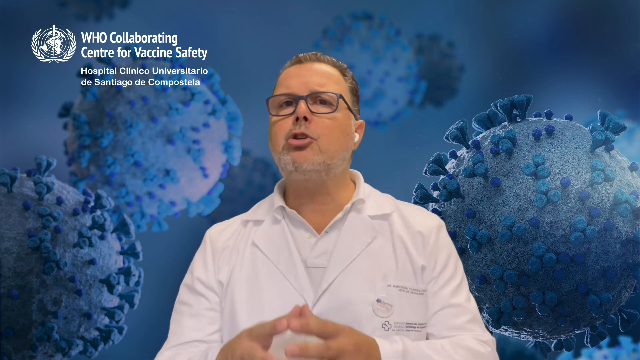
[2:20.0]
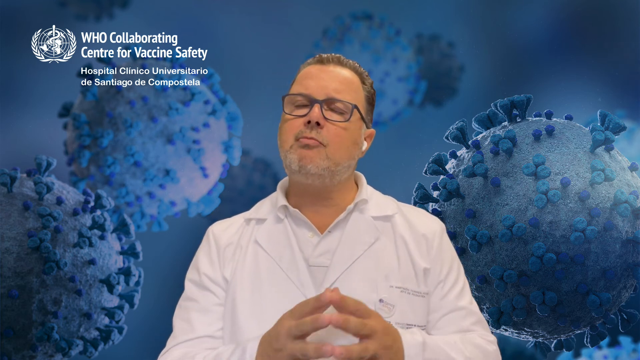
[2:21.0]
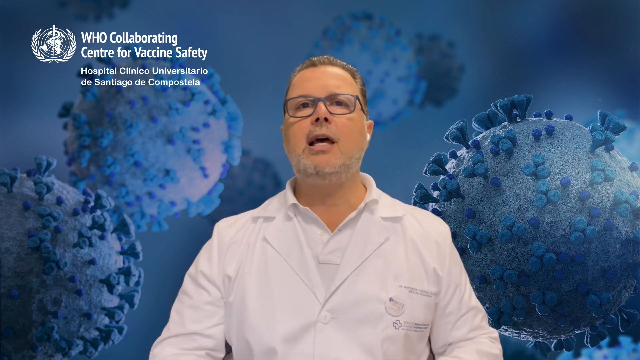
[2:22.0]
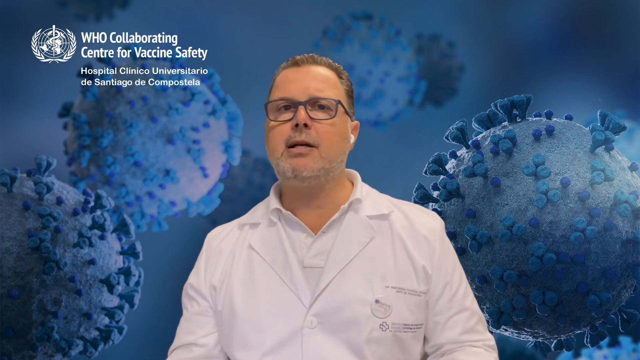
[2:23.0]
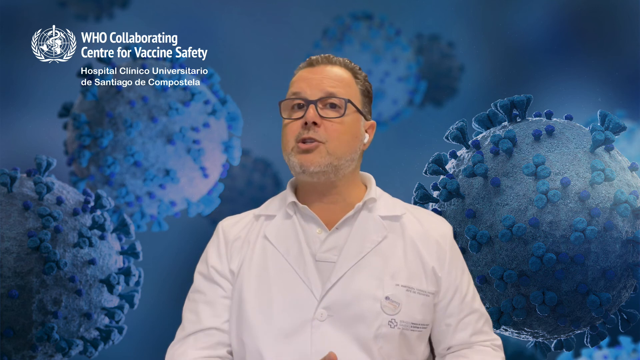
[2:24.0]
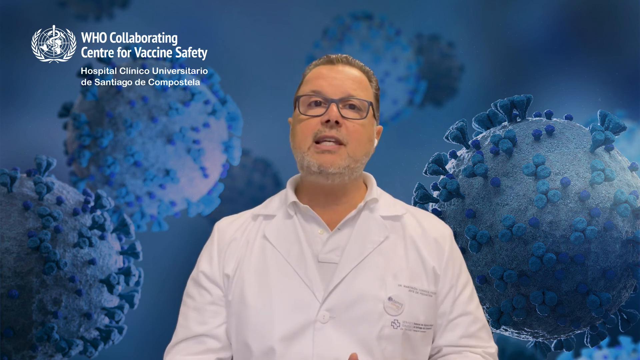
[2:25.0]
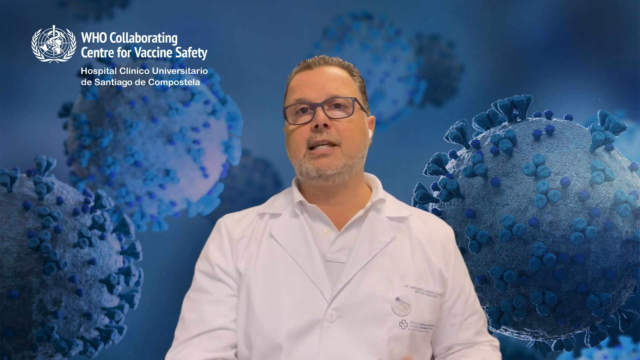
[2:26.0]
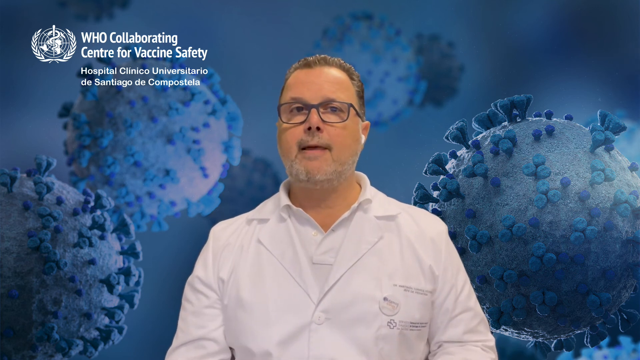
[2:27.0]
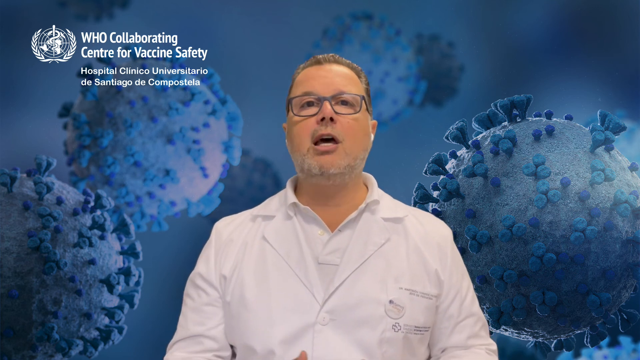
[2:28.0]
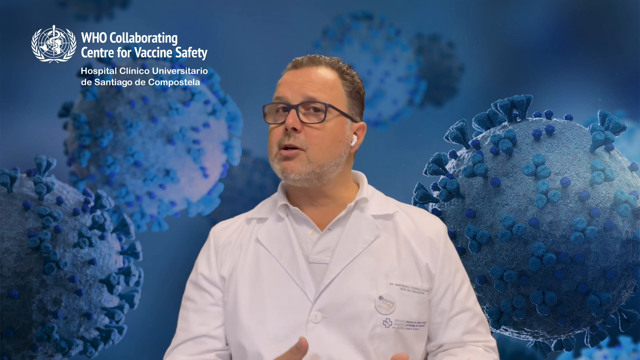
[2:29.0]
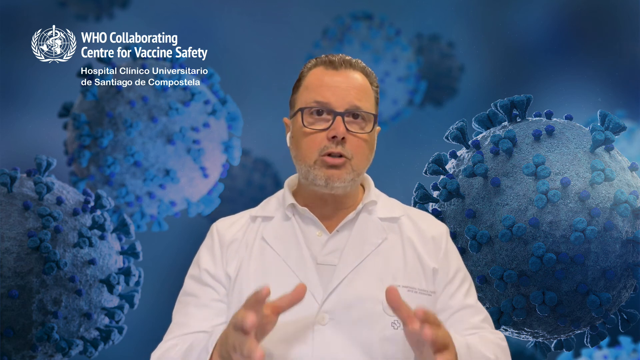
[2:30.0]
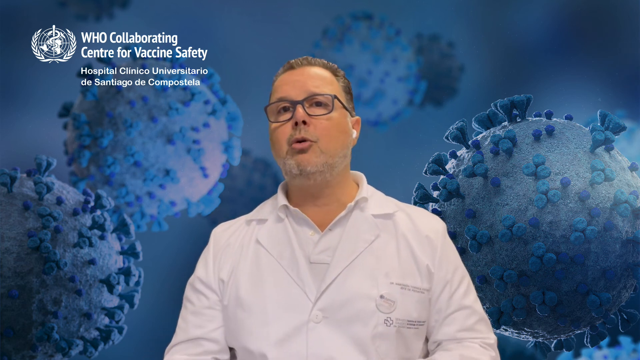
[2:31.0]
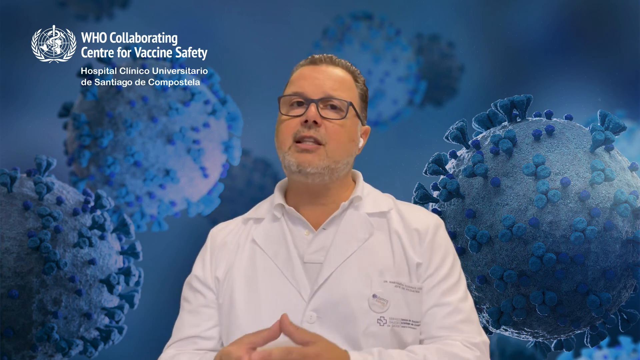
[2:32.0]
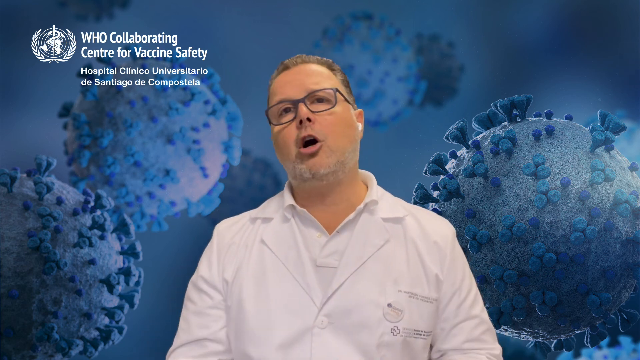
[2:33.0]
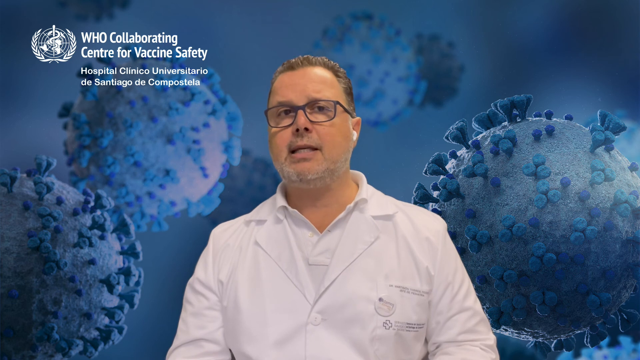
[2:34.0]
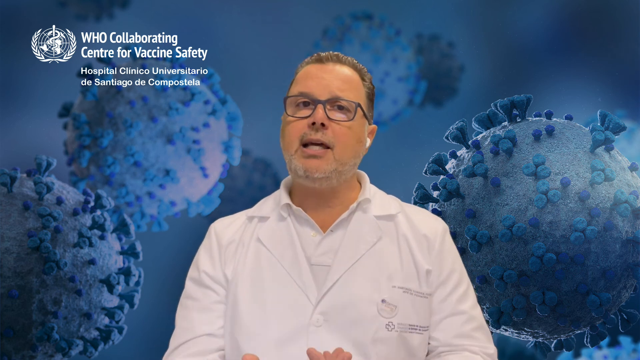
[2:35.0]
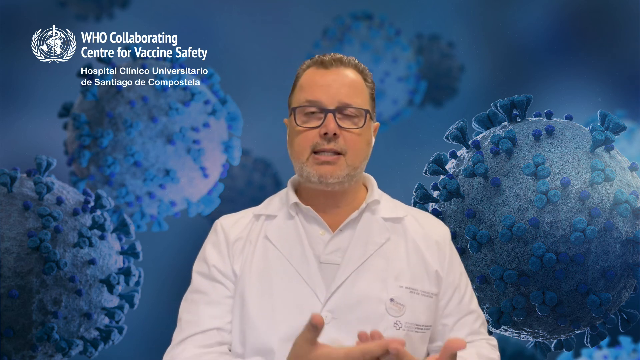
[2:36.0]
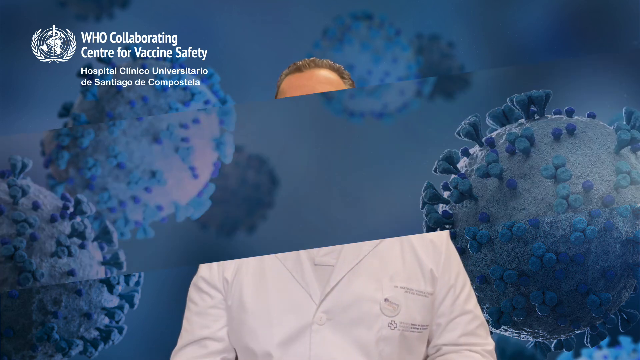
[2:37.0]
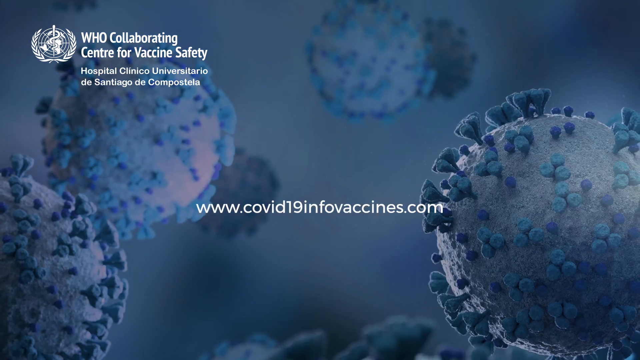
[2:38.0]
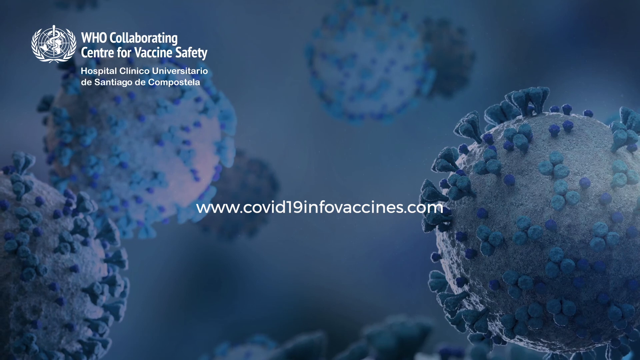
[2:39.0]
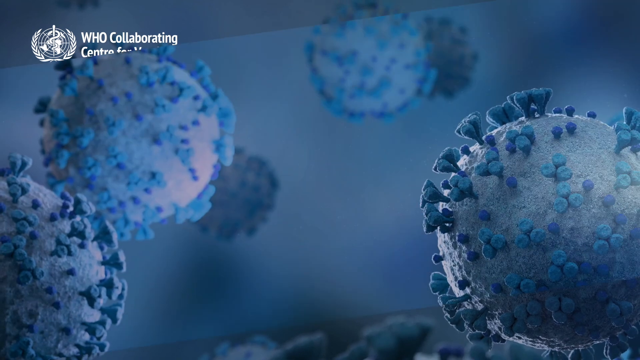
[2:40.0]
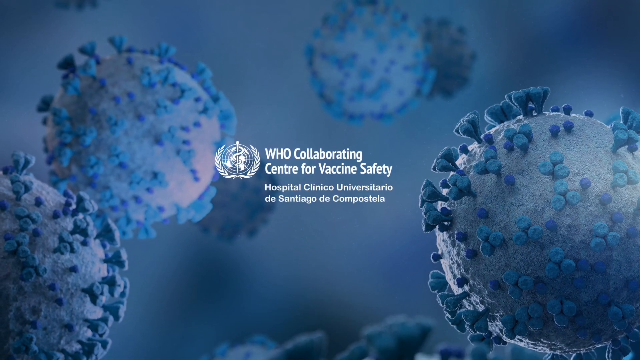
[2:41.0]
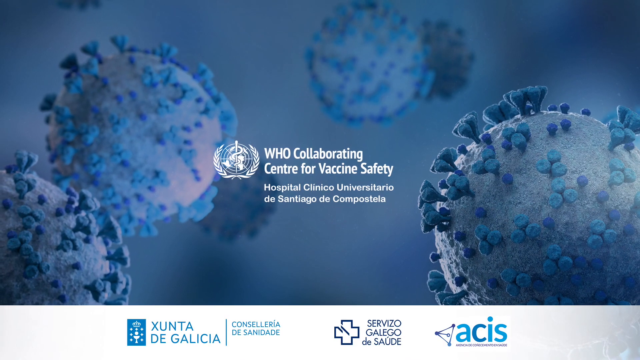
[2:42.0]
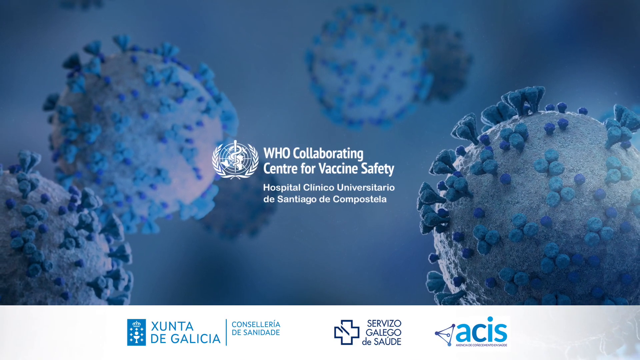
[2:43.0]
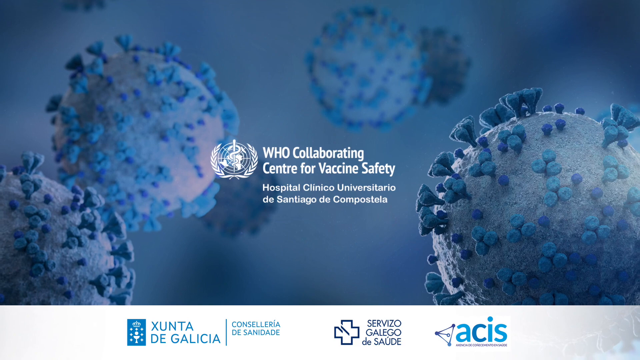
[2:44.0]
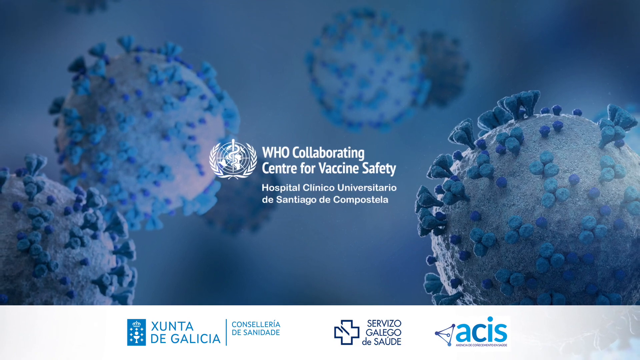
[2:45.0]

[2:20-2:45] The background is blue, with eight spherical objects that are supposed to be viruses spread throughout it. In the upper left is a white symbol, with the white text "WHO Collaborating Center for Vaccine Safety" to its right and, beneath that in smaller white text, "Hospital Clinico Universitario de Santiago de Compostela". In the middle is a man wearing a white lab coat, a white shirt, black glasses and a white earpiece in each ear, facing the viewer. He moves his hands and speaks, blinks a few times, moves his head back and forth, and keeps his hands in front of him, usually together. The man disappears as the screen splits and cuts away. White text in the center reads "www.covid19infovaccines.com". The screen splits away again, and the text "WHO Collaborating Center for Vaccine Safety" with "Hospital Clinico Universitario de Santiago de Compostela" beneath it, along with the symbol to its left, has moved from the upper left corner to the center. At the bottom, a white banner shows blue text reading "Xunta de", "Consularia de Sanidade", "Servizo Gallego" and "ACIS".